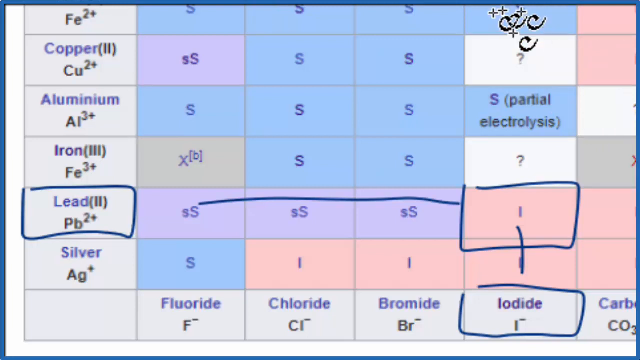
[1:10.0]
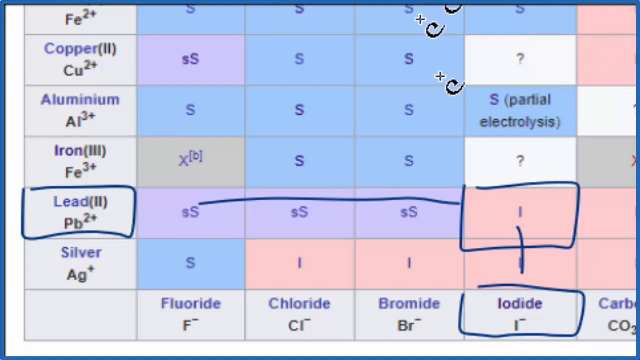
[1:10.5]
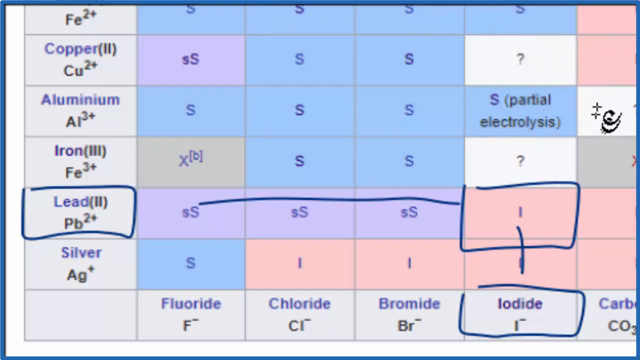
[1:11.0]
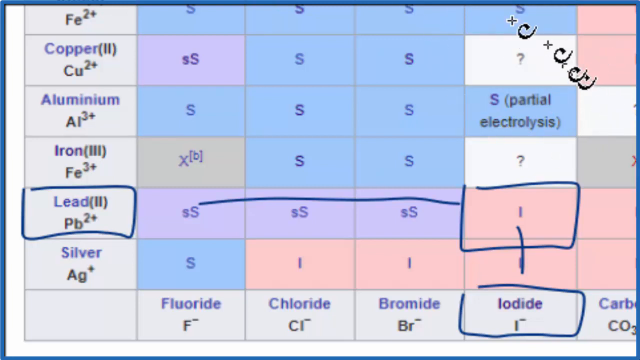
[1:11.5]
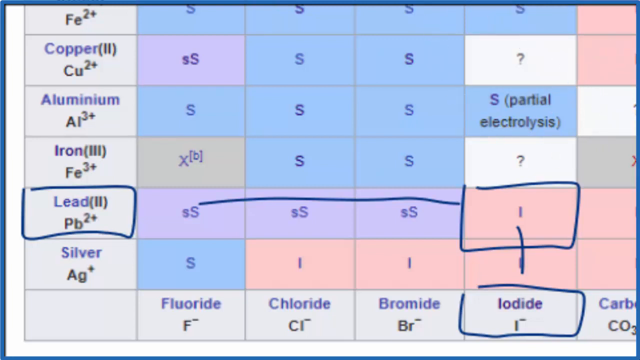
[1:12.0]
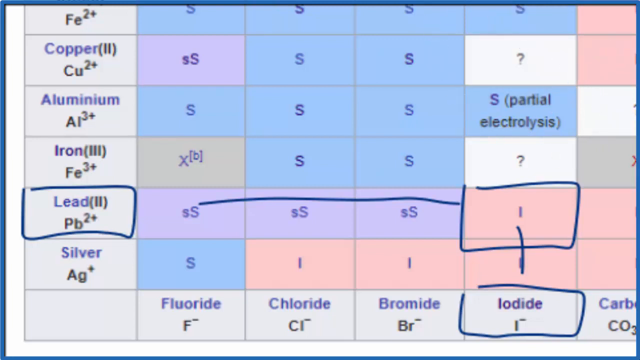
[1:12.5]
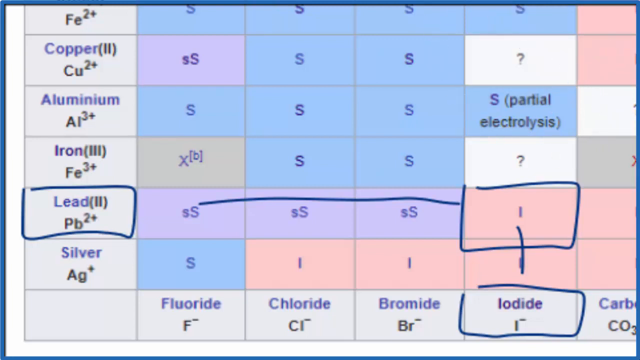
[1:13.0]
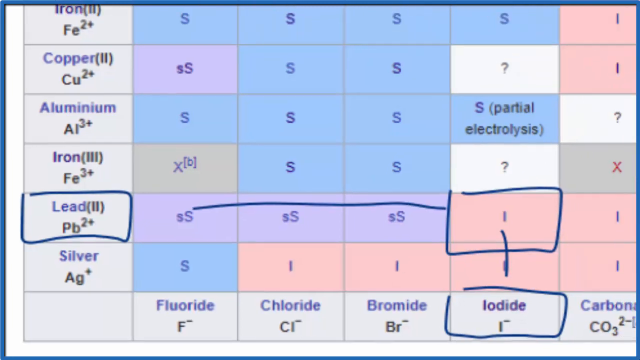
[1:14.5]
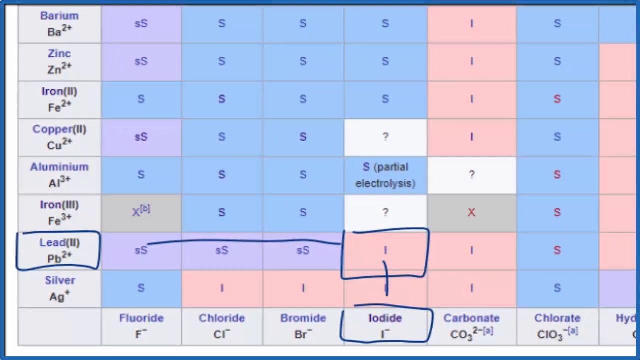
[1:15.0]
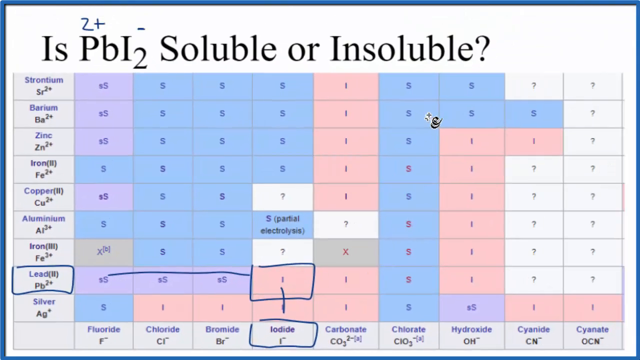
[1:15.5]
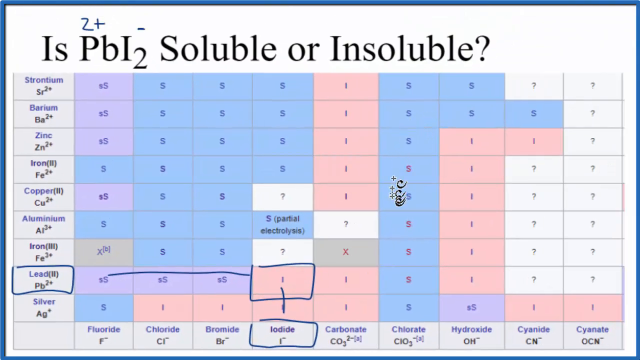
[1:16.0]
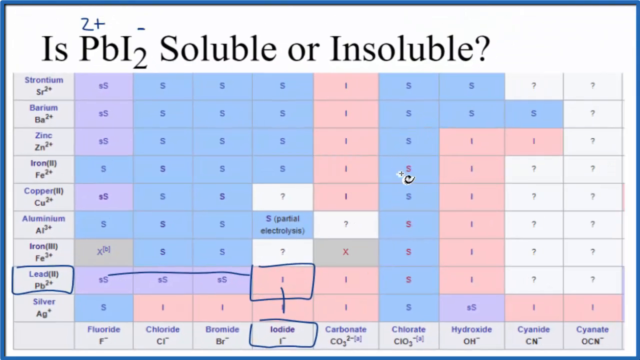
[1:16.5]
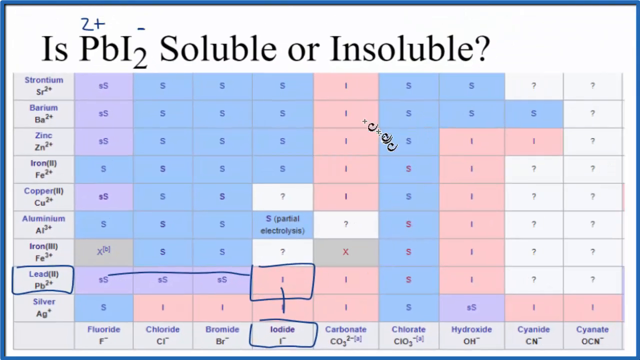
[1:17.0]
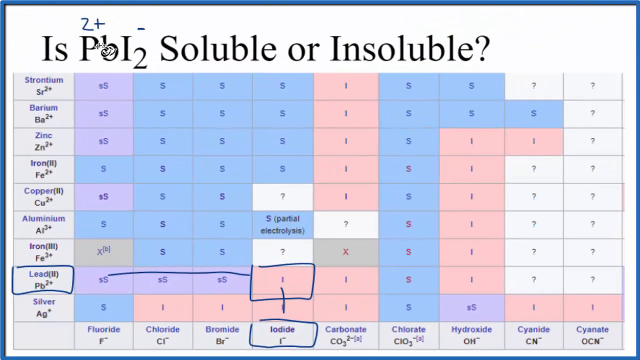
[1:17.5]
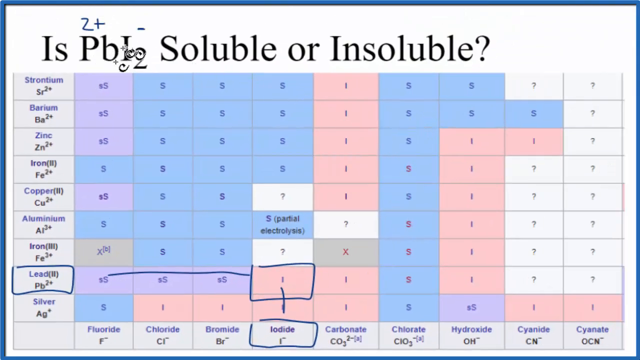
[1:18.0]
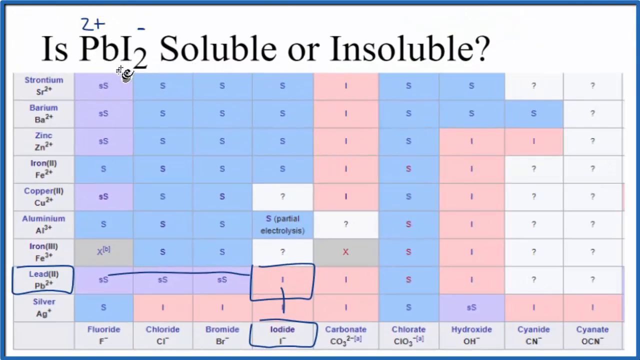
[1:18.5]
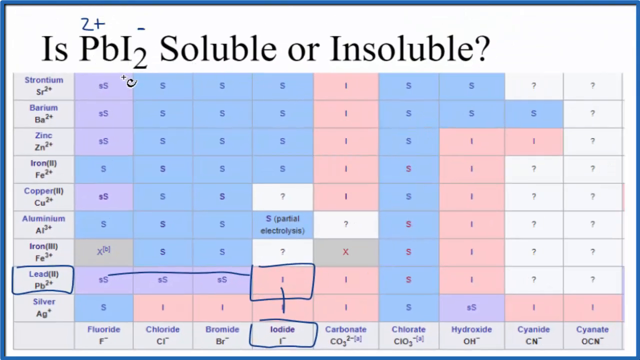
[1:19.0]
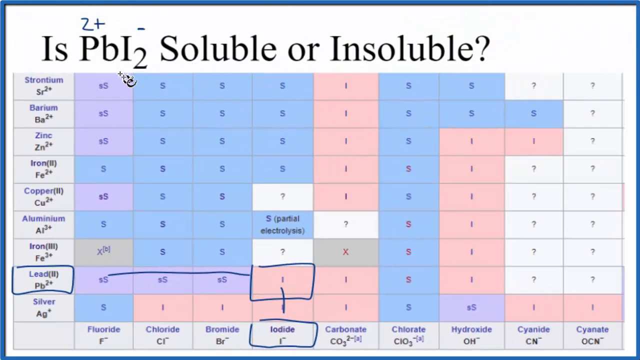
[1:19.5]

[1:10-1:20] A table appears, its left column reading "Fe2+", "iron 2+", "copper 2 Cu2+", "aluminum Al3+", "iron 3 Fe3+", "lead 2 Pb2+" and "silver Ag+". "Lead 2 Pb2+" has a blue line drawn around it, so it looks highlighted. The bottom row reads "fluoride F-", "chloride Cl-", "bromide Br-", "iodide I-" and "carbonate", and iodide also seems to have a blue line drawn around it. A horizontal line is drawn across from the lead, and a vertical line is drawn upward from the iodide; where they meet, a blue line is drawn around a pink rectangle that reads "I". In the chart, the blue rectangles apparently all contain an S, the purple rectangles something like an SS, and the pink rectangles an I. The cursor, which looks like a plus sign with a squiggly line underneath, moves at the top right making some circles. The video then zooms out, showing black text at the top that reads "is PbI2 soluble or insoluble", with a blue "2+" written above "Pb" and a minus written over "I2". The mouse moves over to "PbI2" and makes a counterclockwise circle around it.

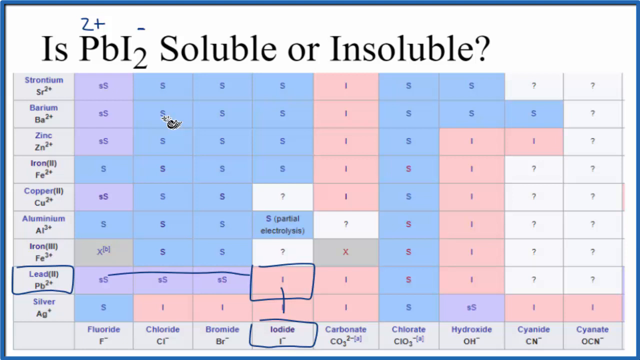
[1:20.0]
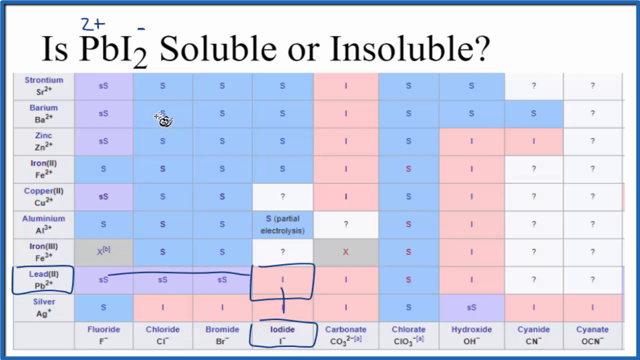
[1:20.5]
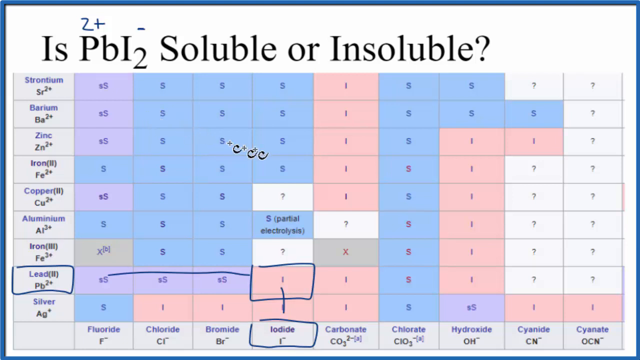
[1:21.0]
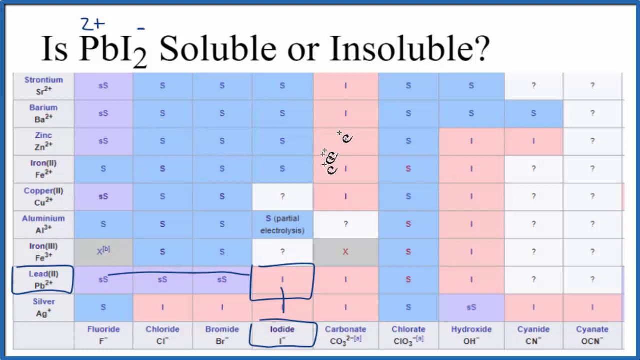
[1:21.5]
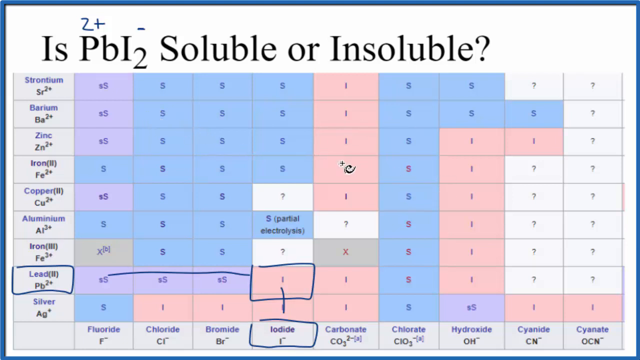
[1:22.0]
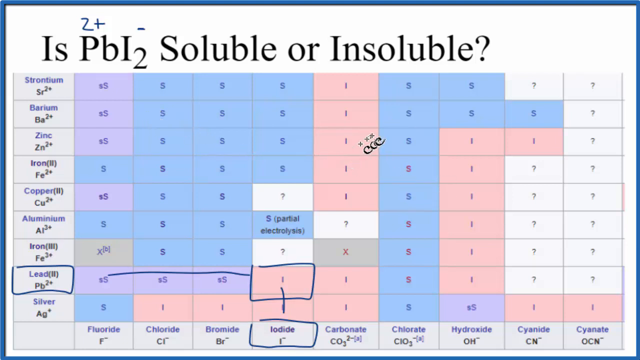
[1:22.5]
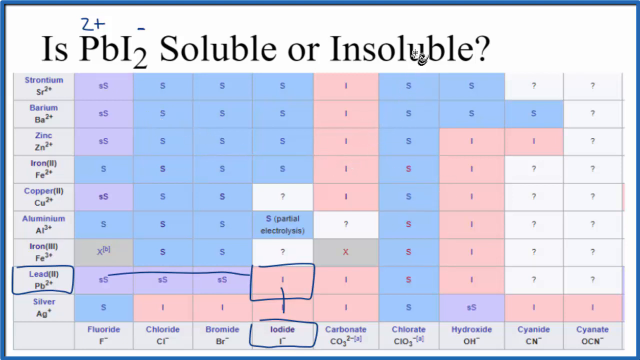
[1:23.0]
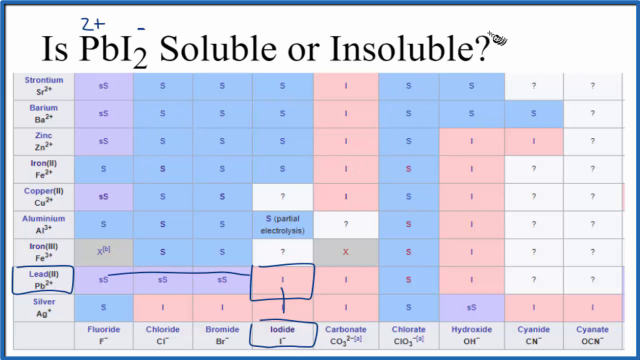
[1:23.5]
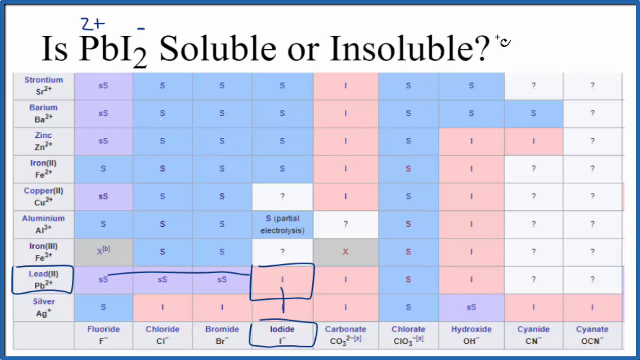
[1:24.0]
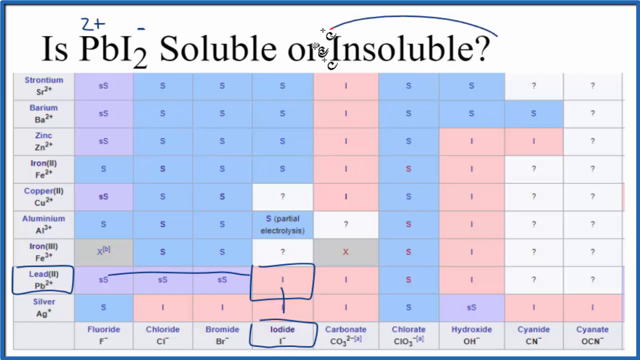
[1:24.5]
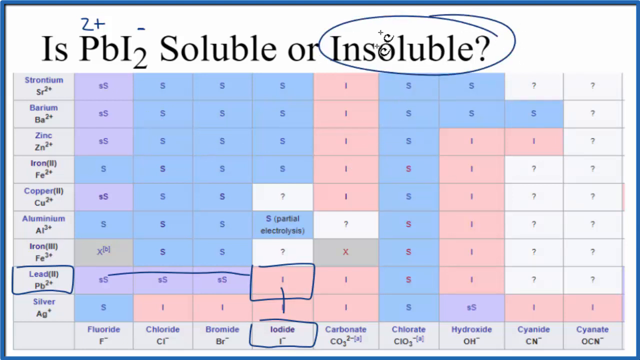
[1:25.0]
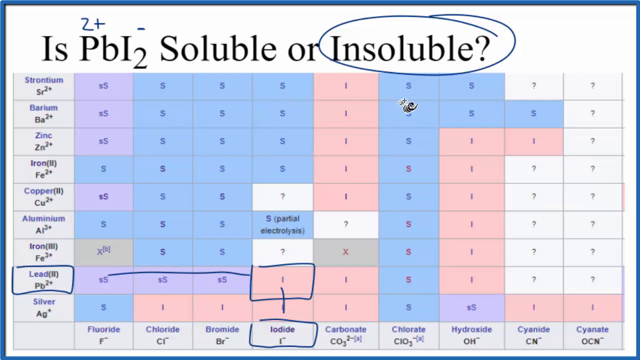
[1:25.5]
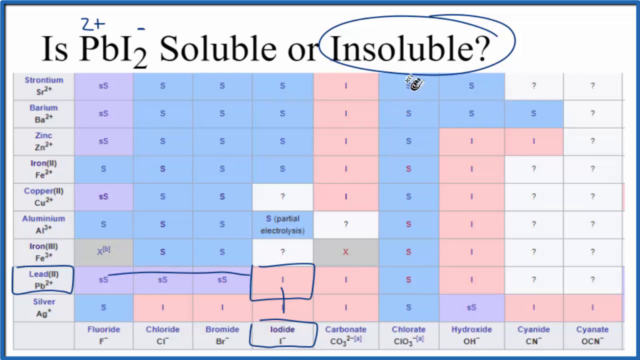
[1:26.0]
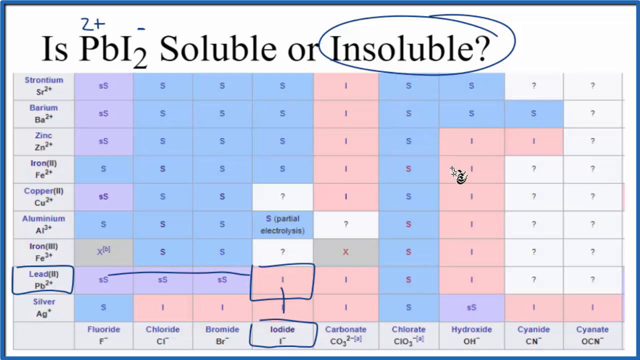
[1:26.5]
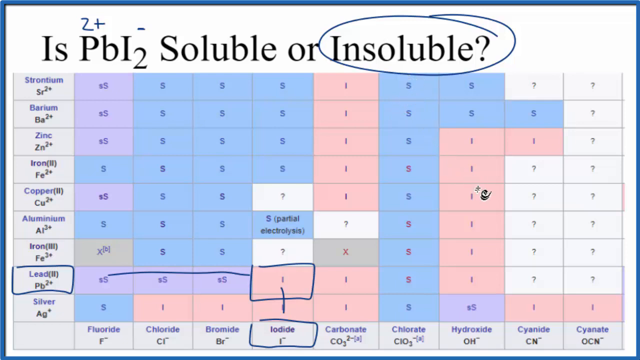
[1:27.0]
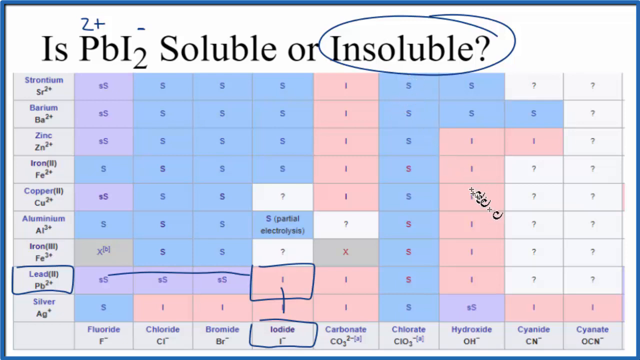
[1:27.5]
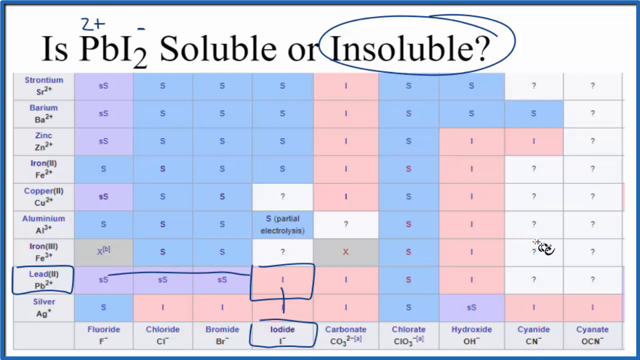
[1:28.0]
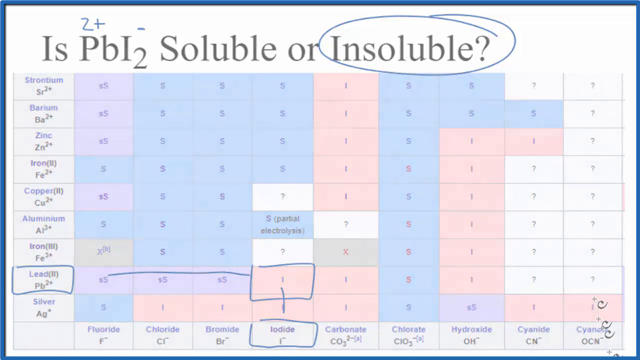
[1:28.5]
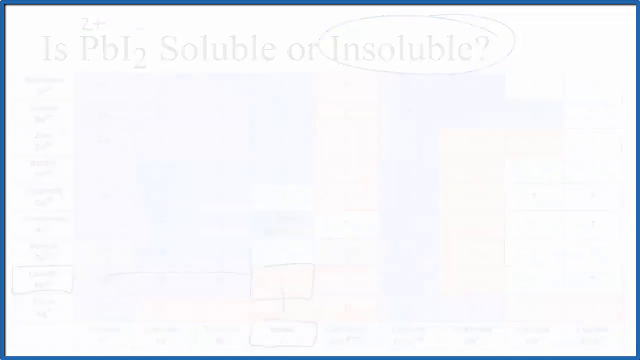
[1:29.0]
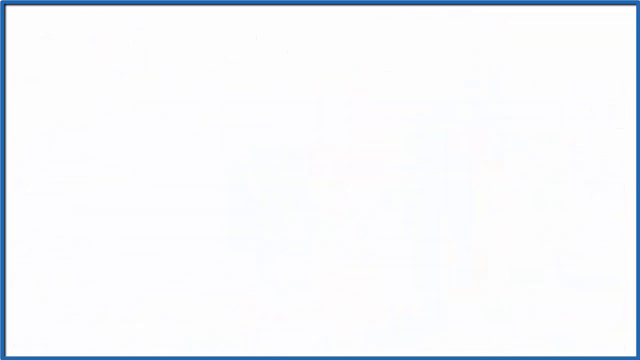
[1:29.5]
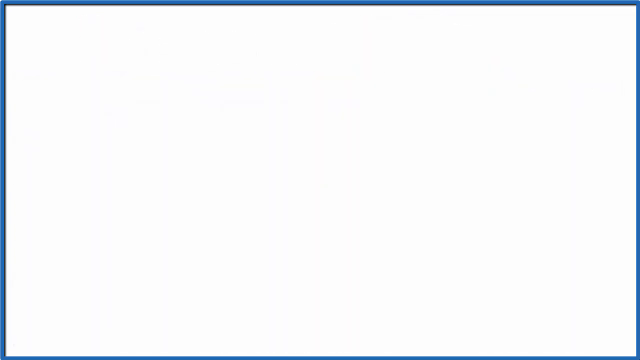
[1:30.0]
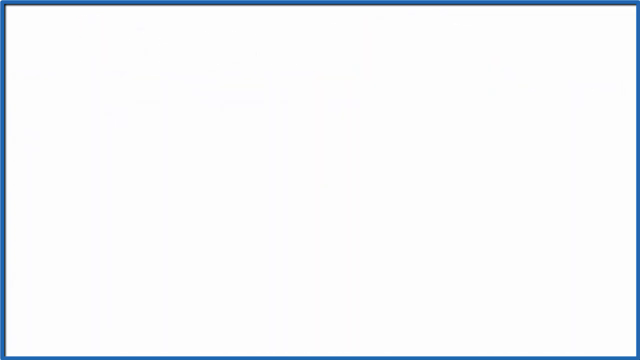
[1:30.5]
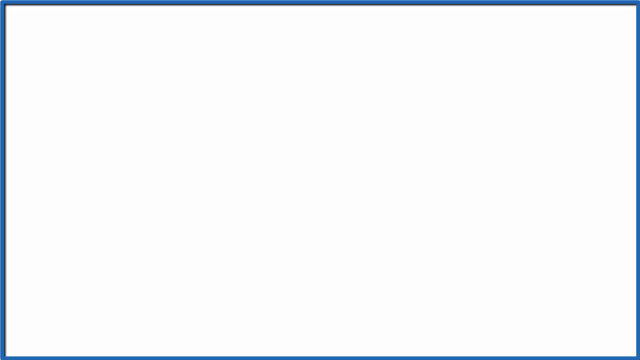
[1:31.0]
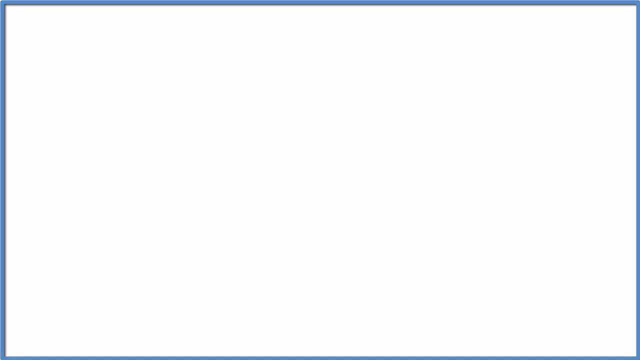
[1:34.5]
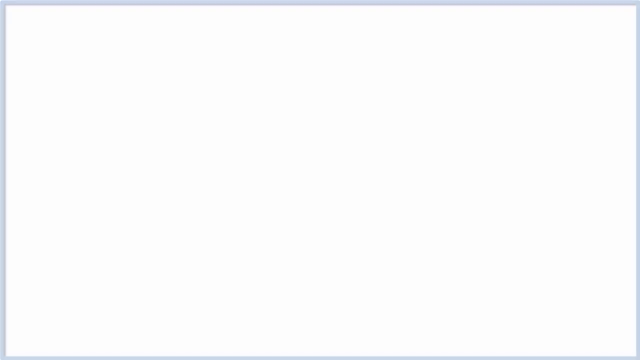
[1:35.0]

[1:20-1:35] A very large table apparently appears on a white background, with black text at the top reading "is PbI2 soluble or insoluble". On the left side, blue text reads "Sr2+", "barium Ba2+", "zinc Zn2+", "iron 2 Fe2+", "copper 2 Cu2+", "aluminum Al2+", "iron 3 Fe3+", "lead 2 Pb2+" and "silver Ag+". The bottom row looks like blue text with black text underneath it, reading "fluoride F-", "chloride Cl-", "bromide Br-", "iodide I-", "carbonate CO3 2-", "chlorate ClO3-", "hydroxide OH-", "cyanide CN-" and "cyanide OCN-". Dispersed through the middle of the table are blue rectangles with an S inside, pink rectangles with an I inside, white rectangles with a question mark, and what looks like purple rectangles with a double S. The lead on the left side apparently is highlighted with a blue line, and a horizontal line is drawn three squares over. At the bottom, iodide has been circled with a blue line, and one vertical line is drawn one rectangle upward. Where lead and iodide intersect, a pink rectangle with an I inside is highlighted in blue. The mouse cursor moves around, then goes up to the title and circles "insoluble" with a blue line. The video then fades to white.